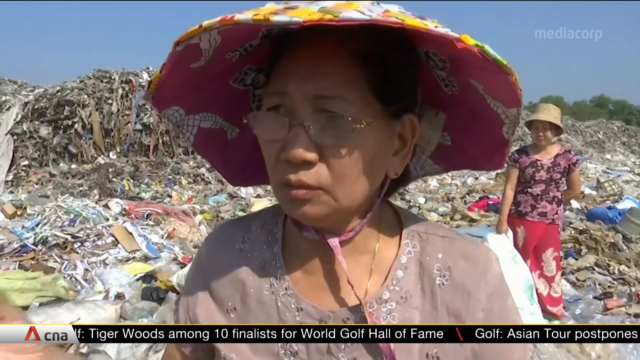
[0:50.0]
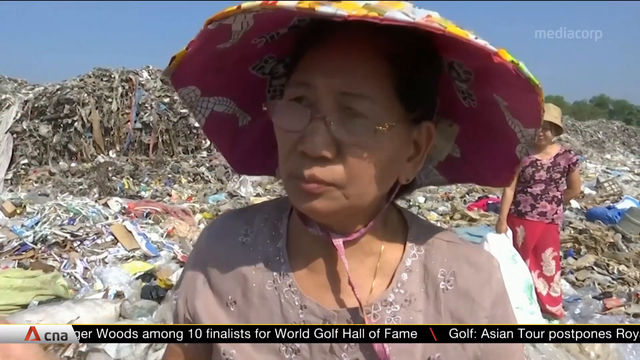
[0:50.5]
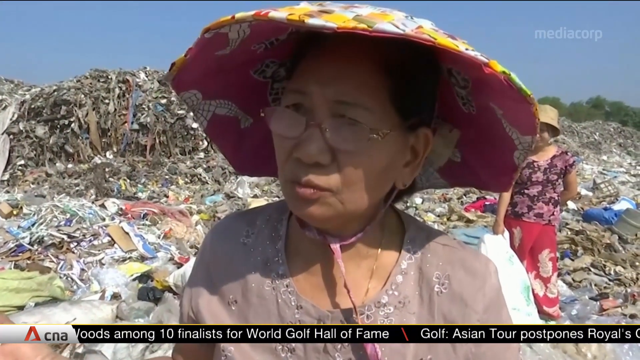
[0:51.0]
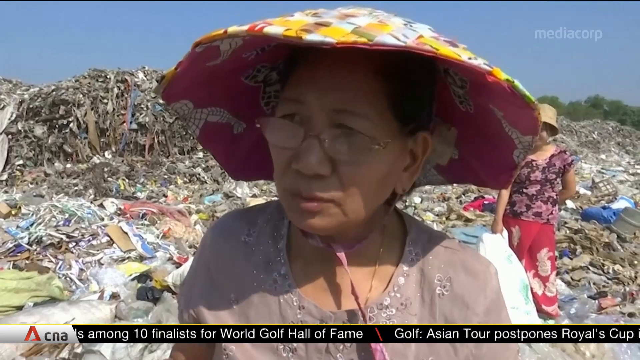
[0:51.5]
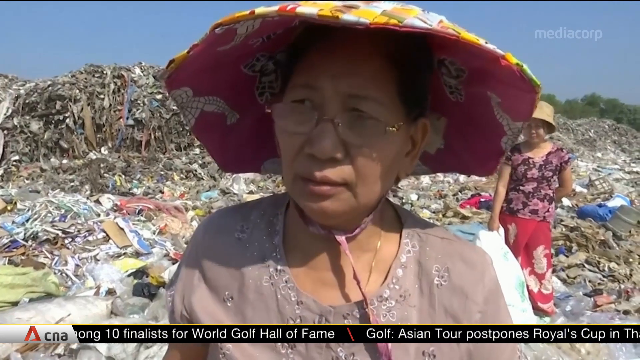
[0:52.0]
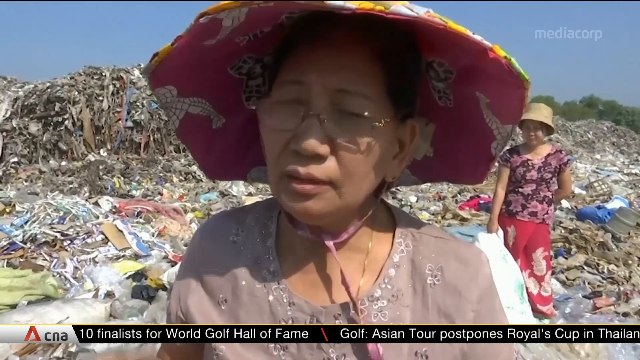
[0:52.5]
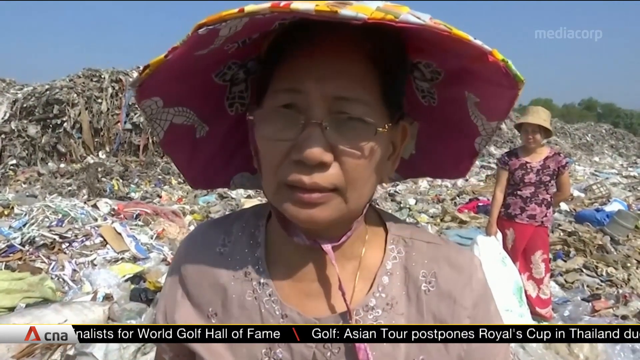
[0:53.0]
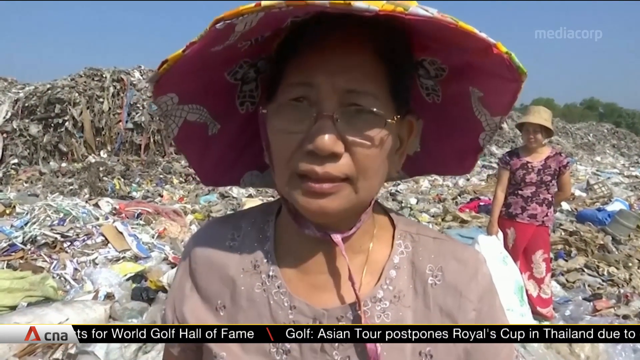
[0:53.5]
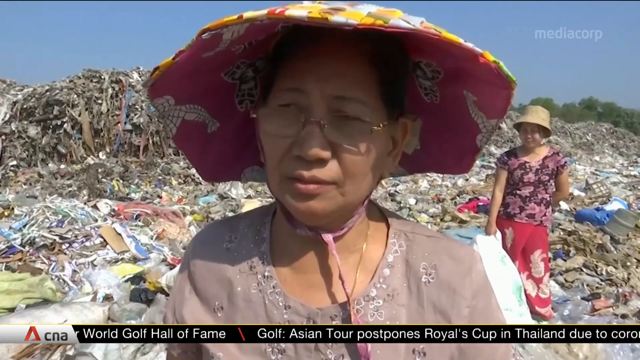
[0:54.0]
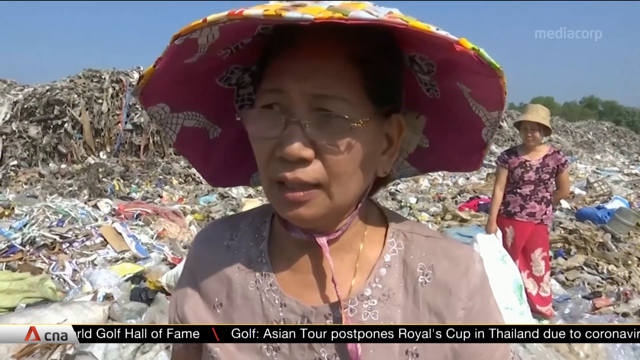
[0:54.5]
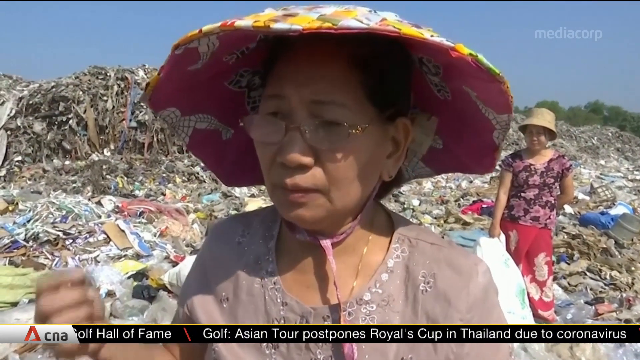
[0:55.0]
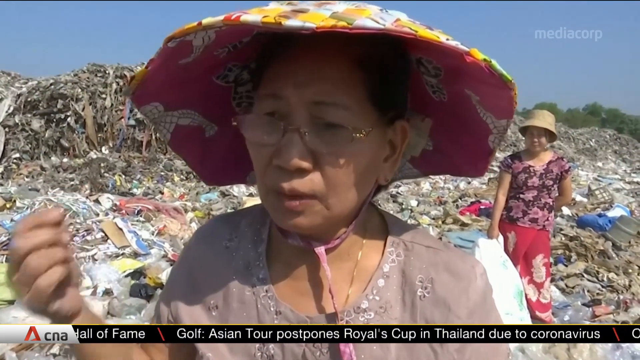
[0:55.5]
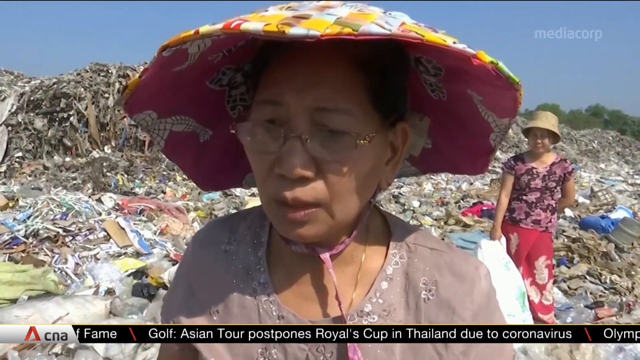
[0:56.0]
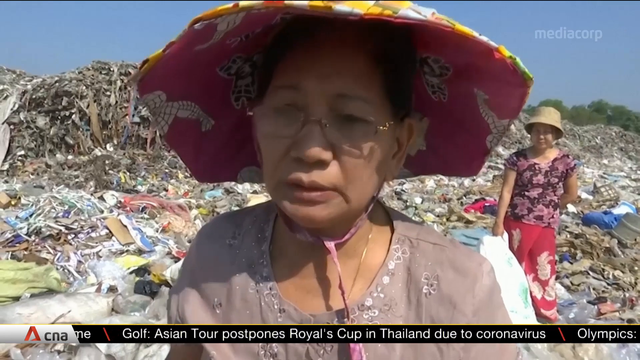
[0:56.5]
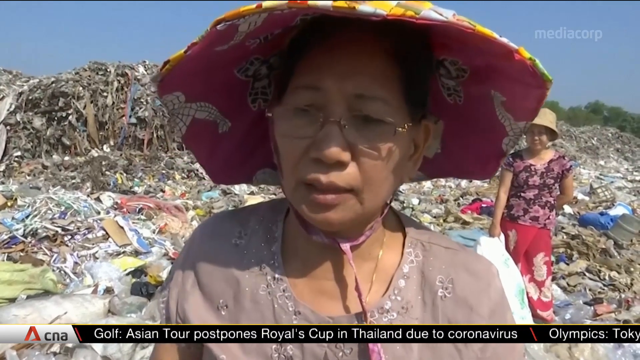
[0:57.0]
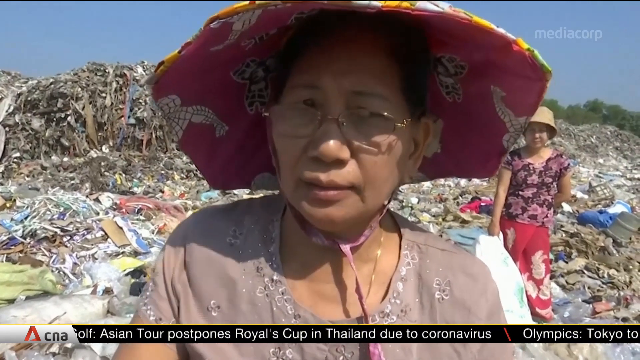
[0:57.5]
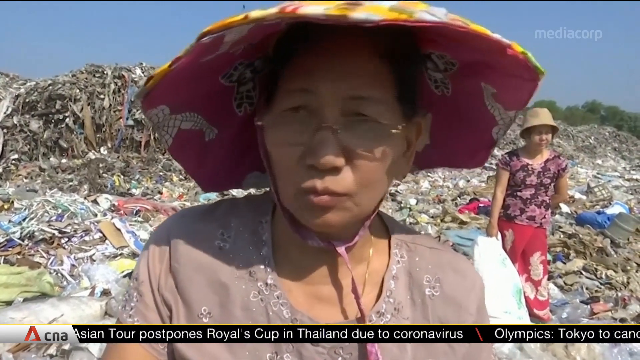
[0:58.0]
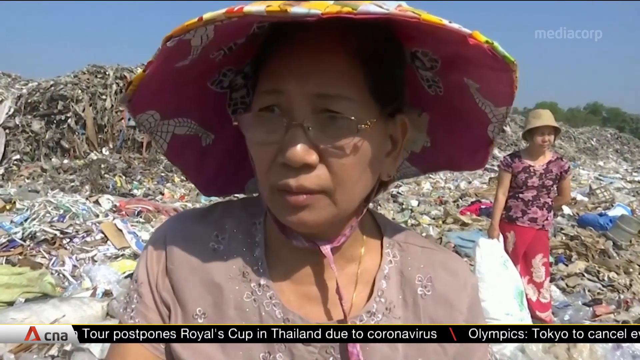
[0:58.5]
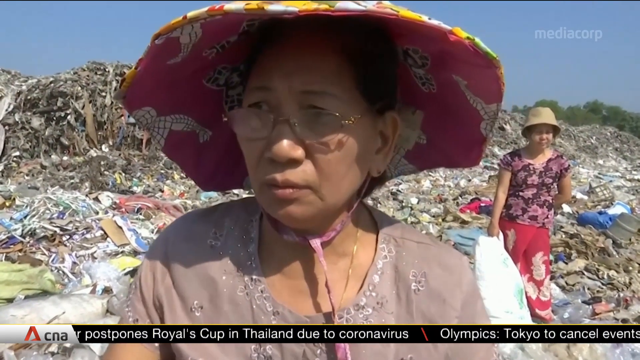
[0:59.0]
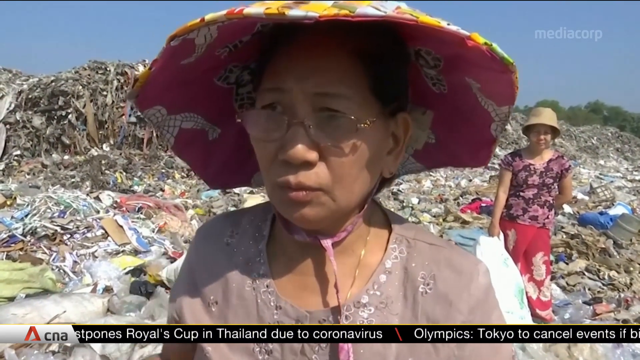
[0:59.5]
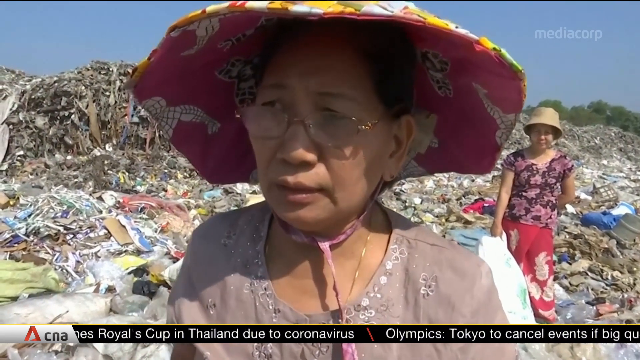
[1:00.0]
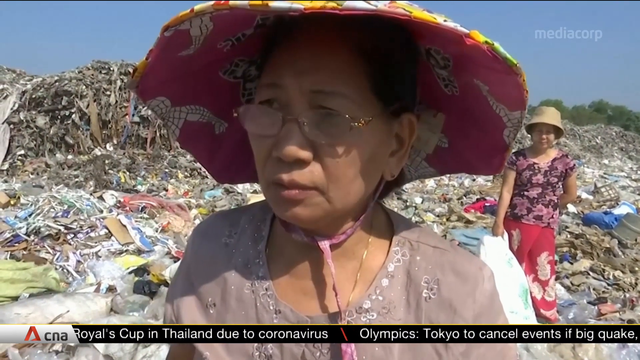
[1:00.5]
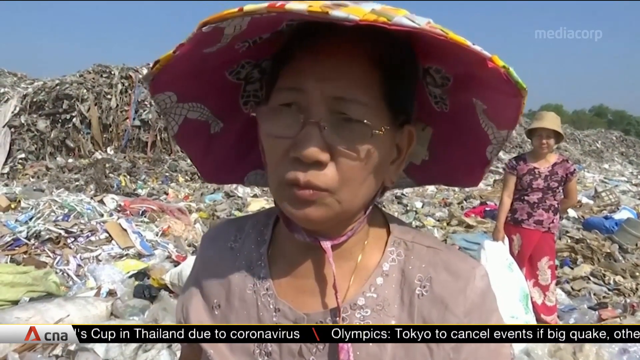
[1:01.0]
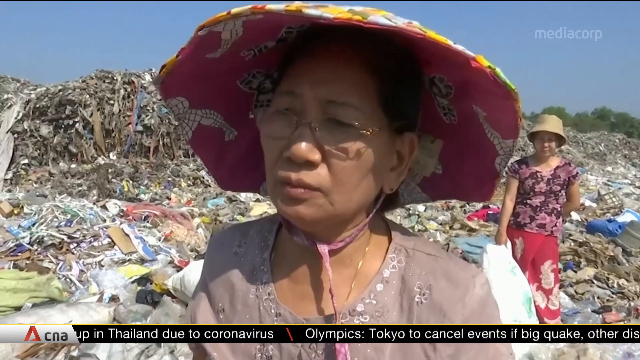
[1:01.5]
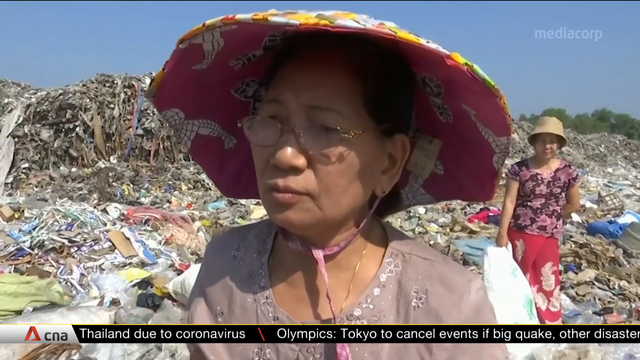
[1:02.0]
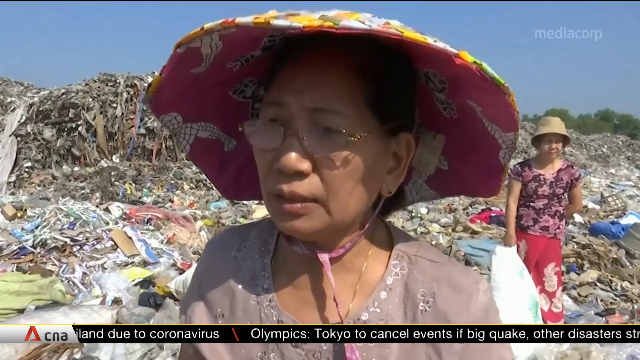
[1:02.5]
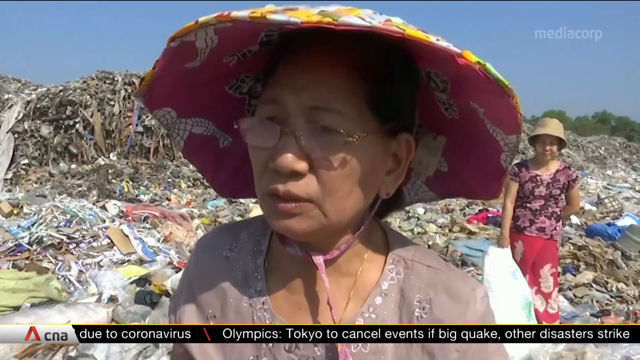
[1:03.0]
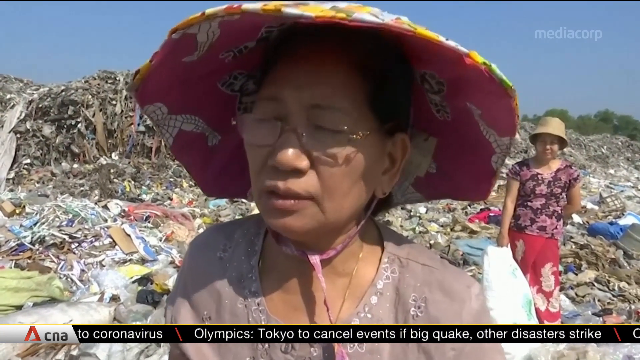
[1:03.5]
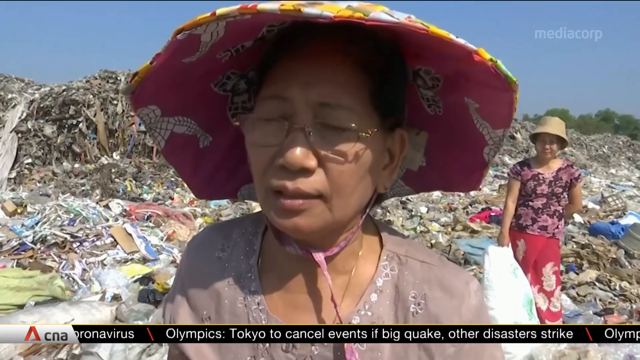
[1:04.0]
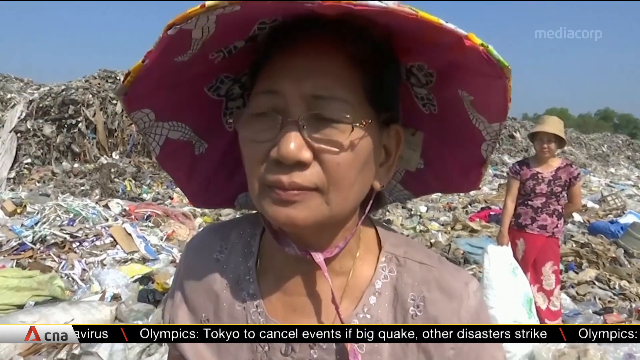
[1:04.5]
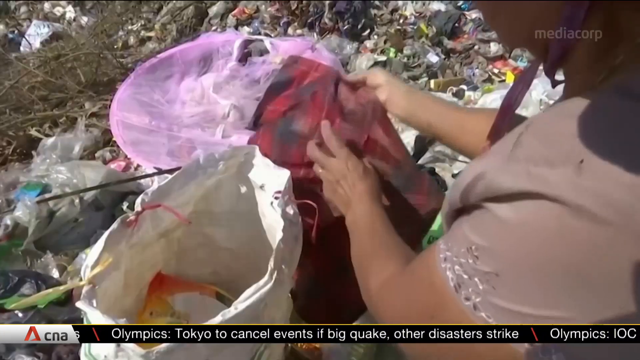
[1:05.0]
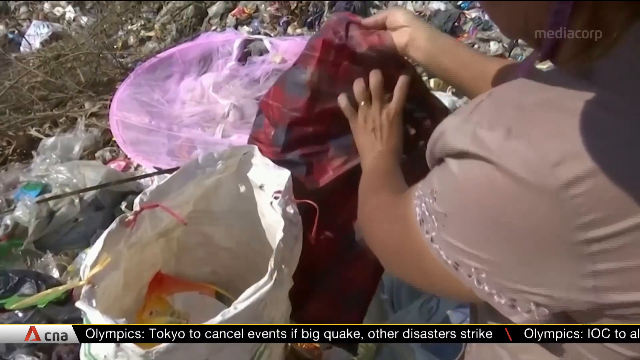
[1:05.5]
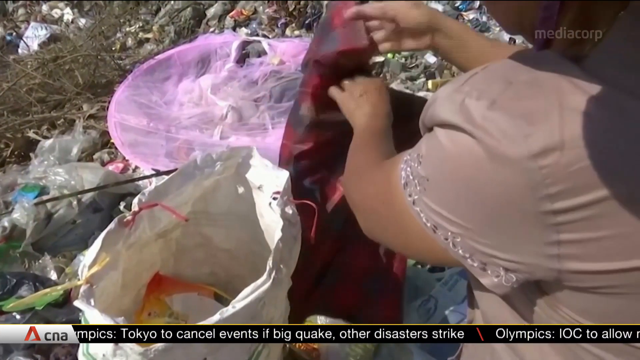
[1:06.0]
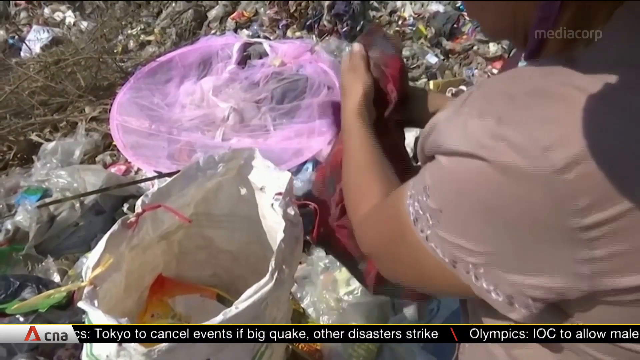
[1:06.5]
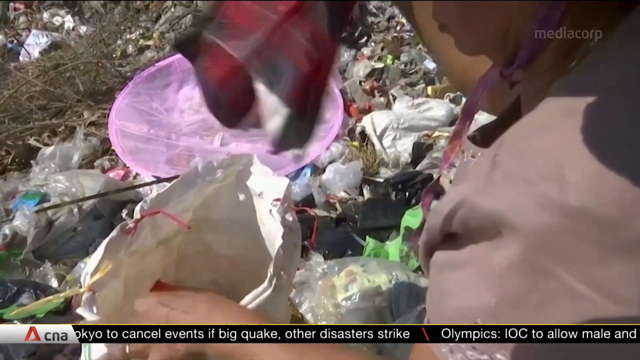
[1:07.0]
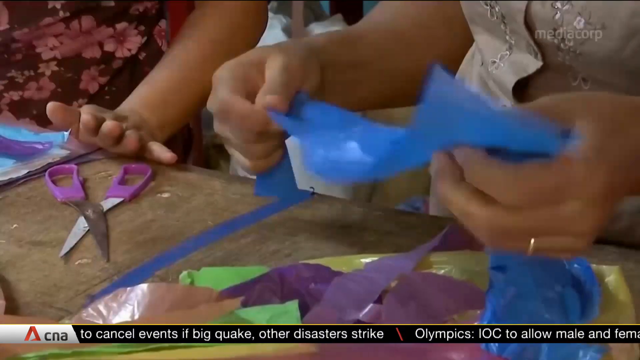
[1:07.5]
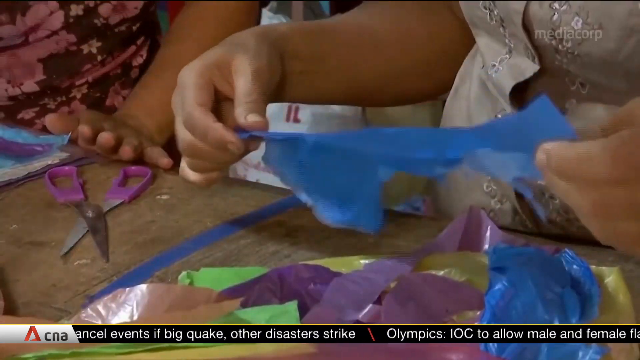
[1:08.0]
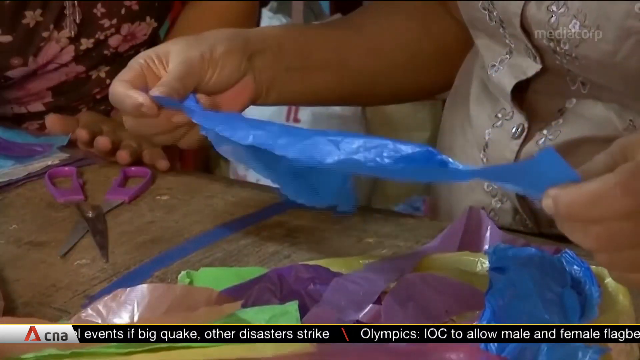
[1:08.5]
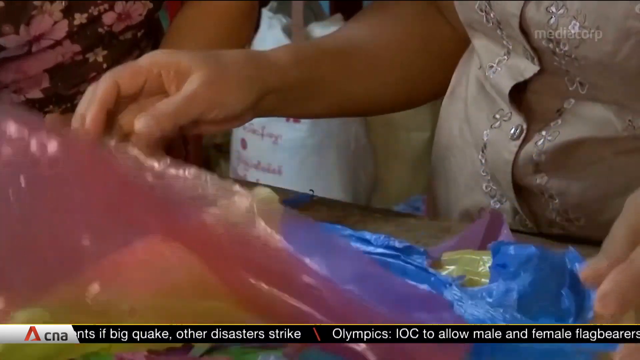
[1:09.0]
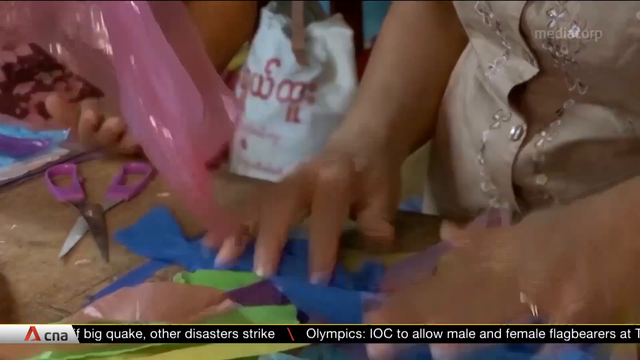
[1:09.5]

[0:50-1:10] A lady wears a pink sun hat decorated with Spider-Man and a grey top. Behind her is another woman wearing a brown hat and a top that looks like a paper with flowers. The background is a waste site with a lot of rubbish. The first lady is talking and looks down, without energy. She picks up rubbish. The women seem to be doing recycling, as the video shows them busy at work, with plastic in the background and a pair of scissors visible.